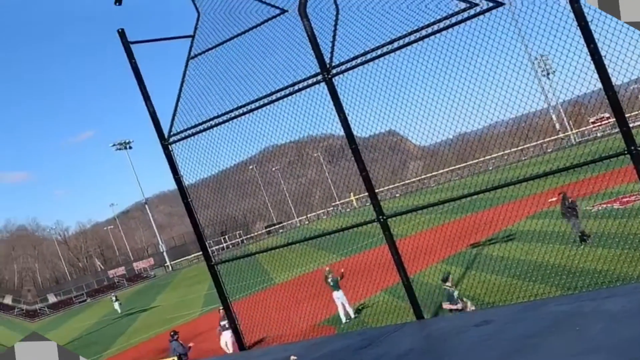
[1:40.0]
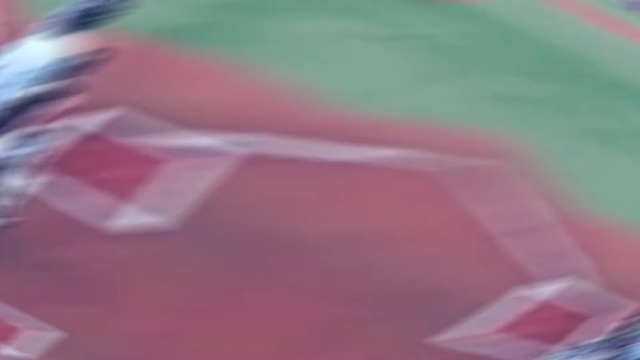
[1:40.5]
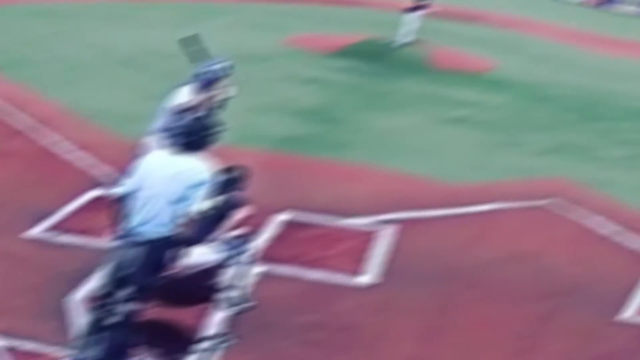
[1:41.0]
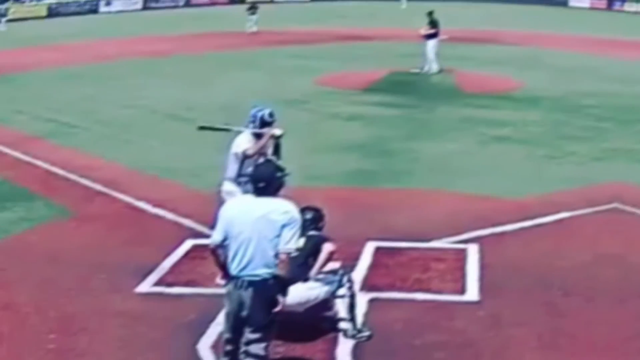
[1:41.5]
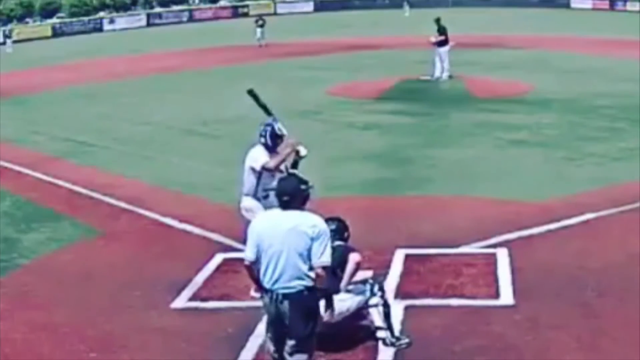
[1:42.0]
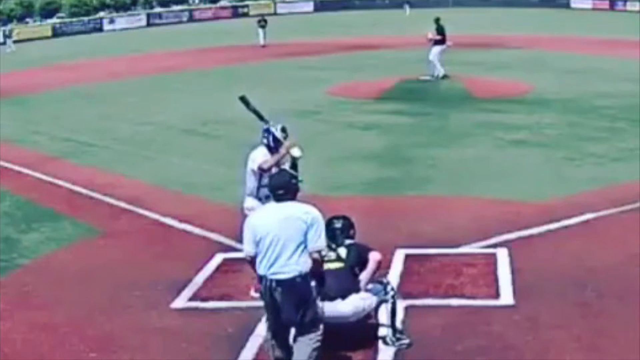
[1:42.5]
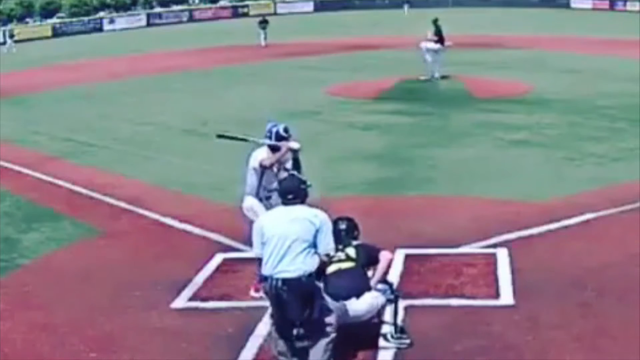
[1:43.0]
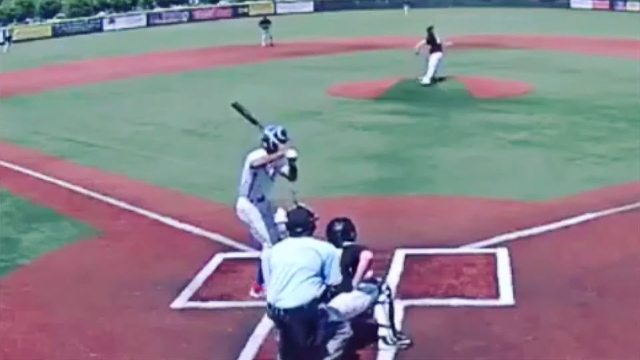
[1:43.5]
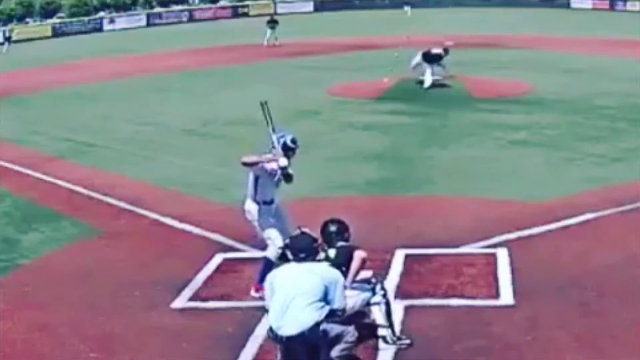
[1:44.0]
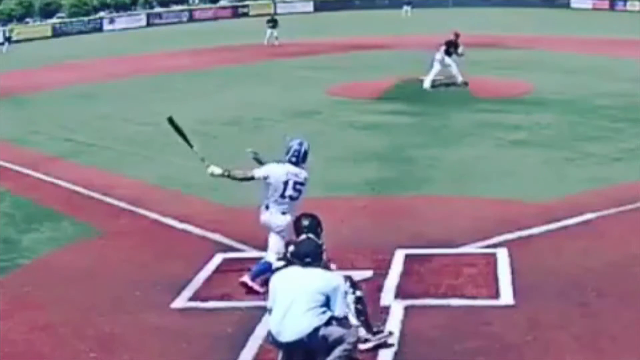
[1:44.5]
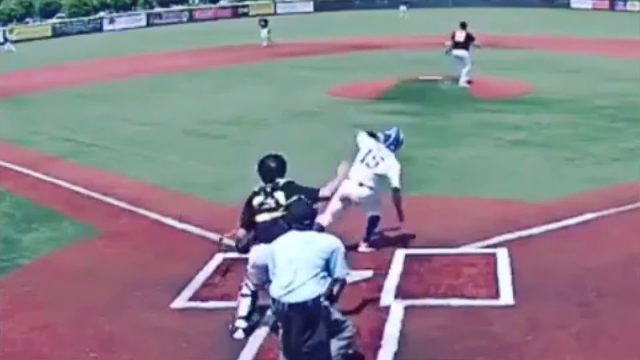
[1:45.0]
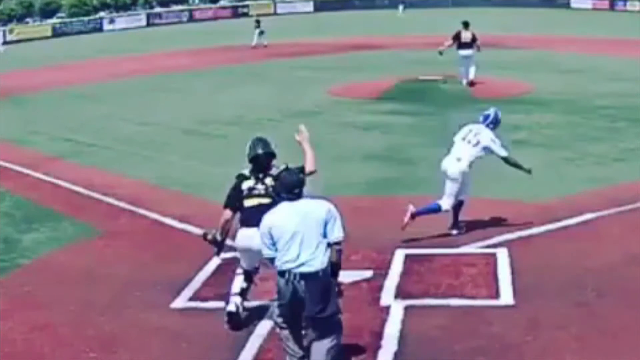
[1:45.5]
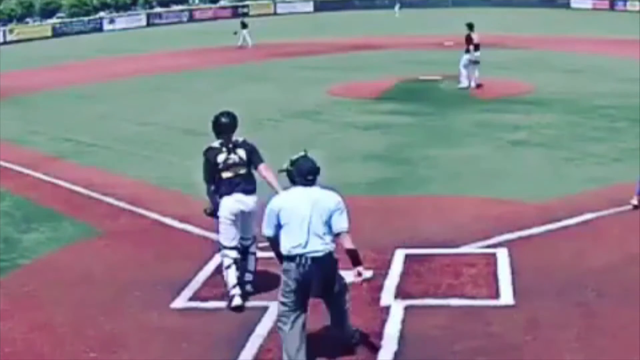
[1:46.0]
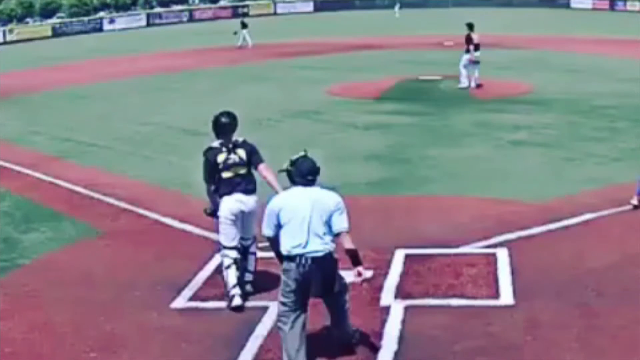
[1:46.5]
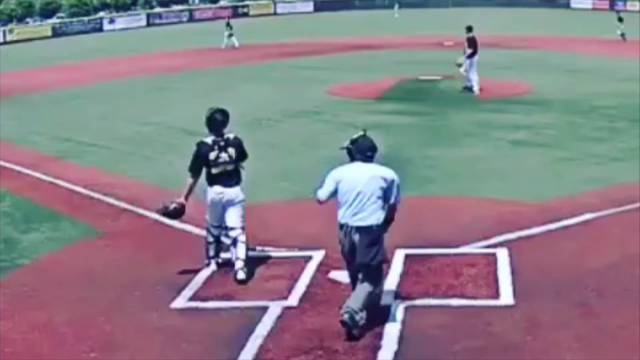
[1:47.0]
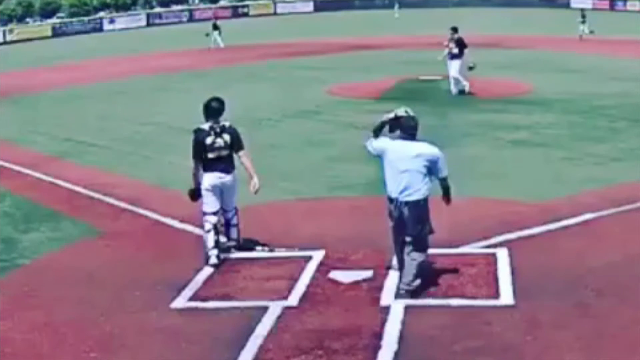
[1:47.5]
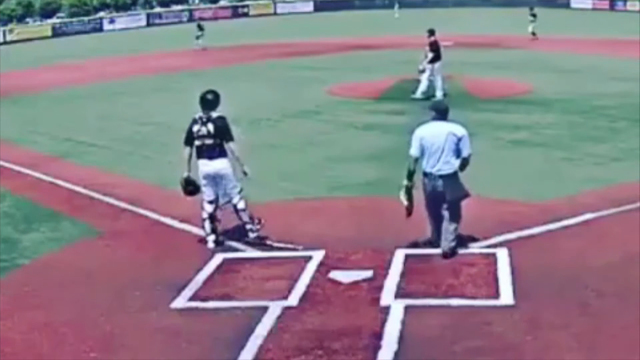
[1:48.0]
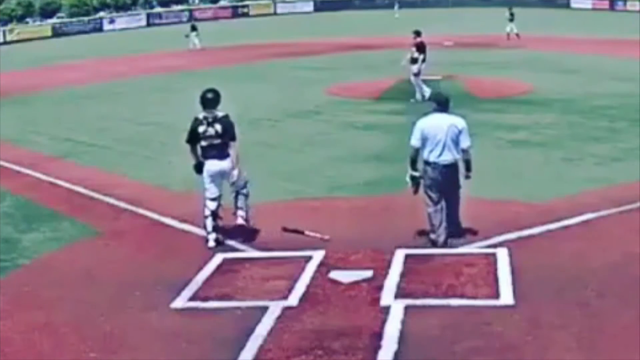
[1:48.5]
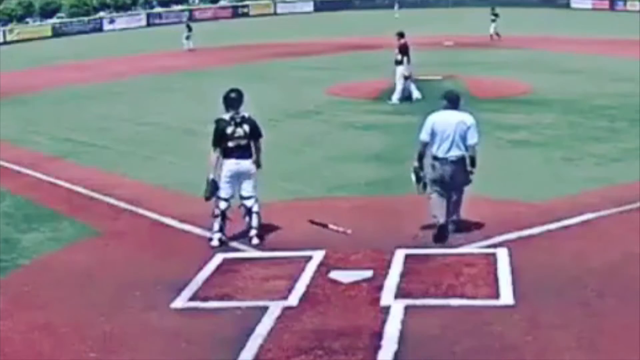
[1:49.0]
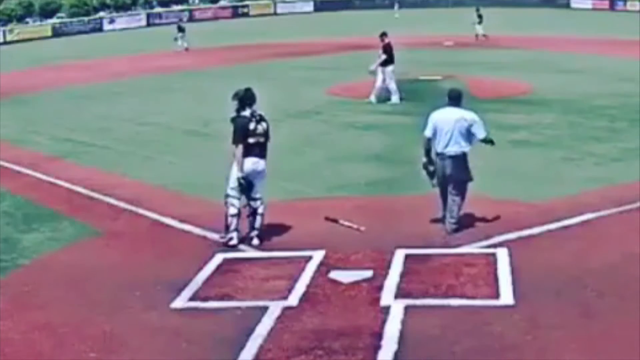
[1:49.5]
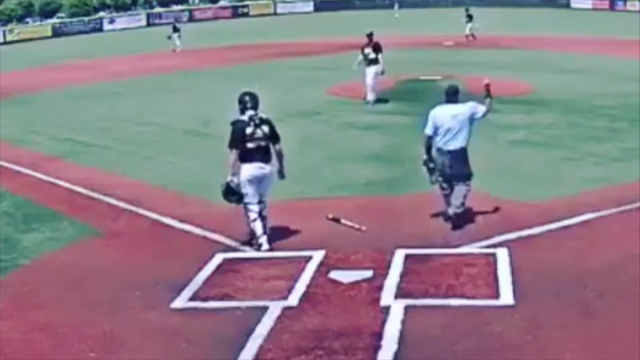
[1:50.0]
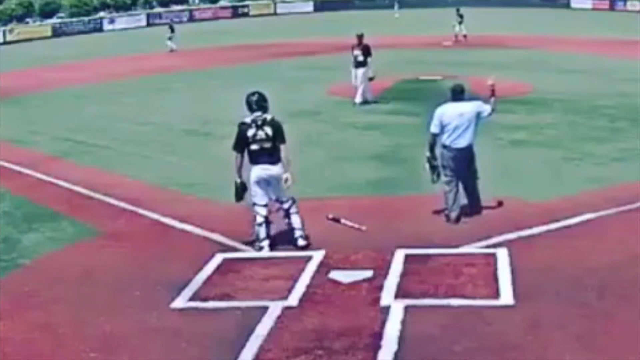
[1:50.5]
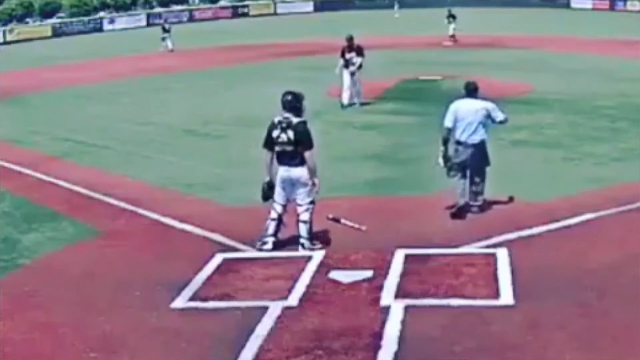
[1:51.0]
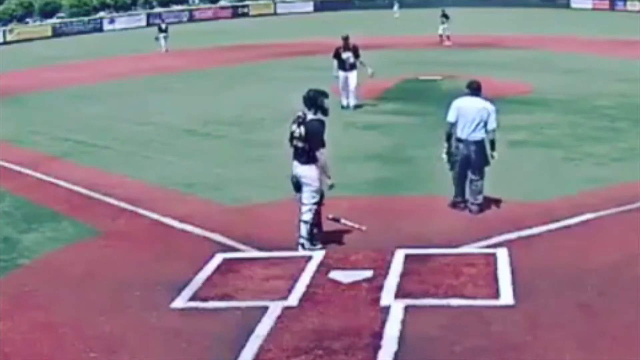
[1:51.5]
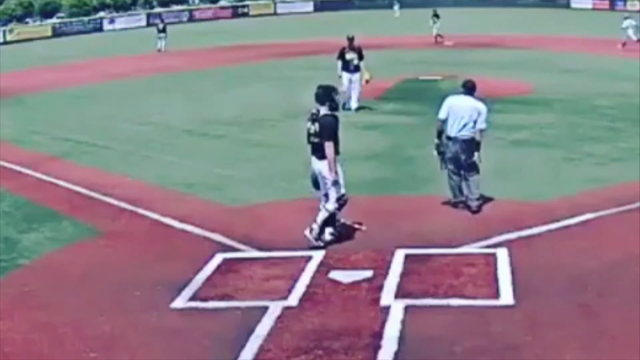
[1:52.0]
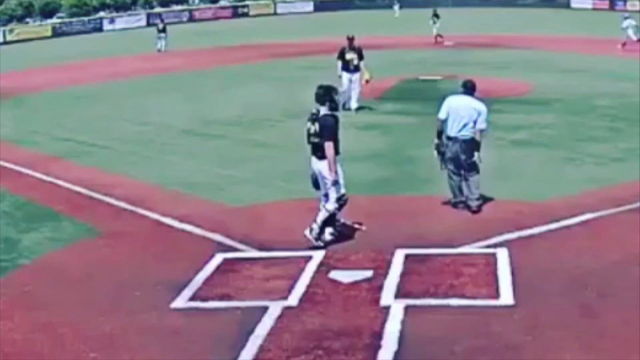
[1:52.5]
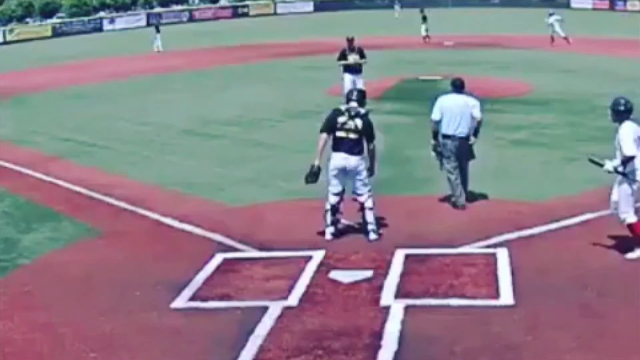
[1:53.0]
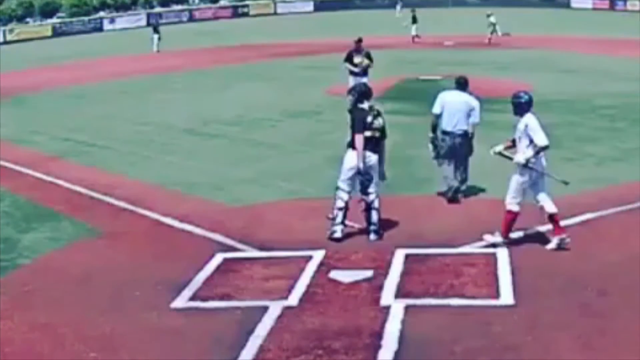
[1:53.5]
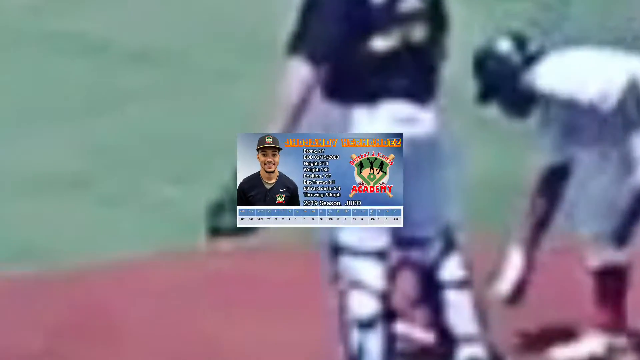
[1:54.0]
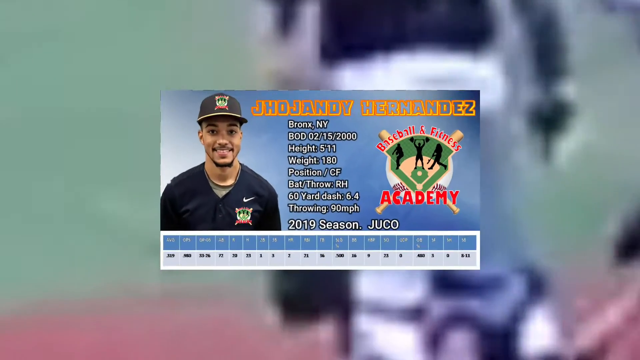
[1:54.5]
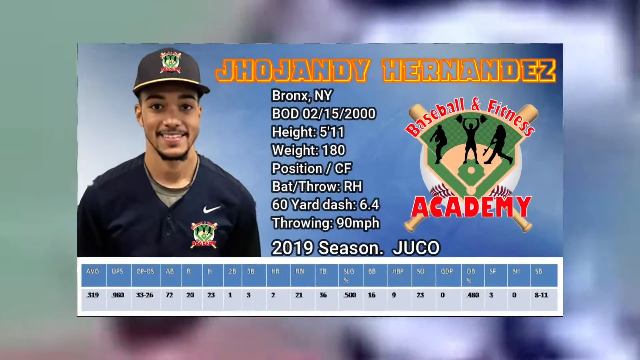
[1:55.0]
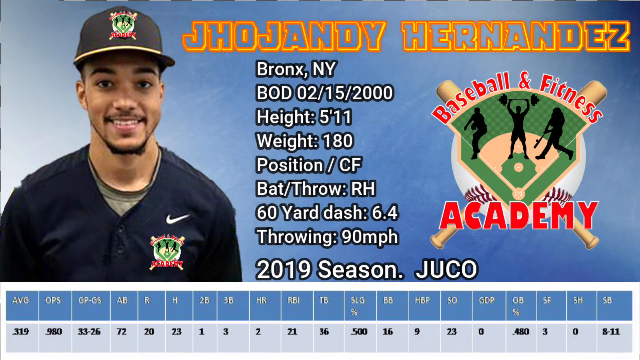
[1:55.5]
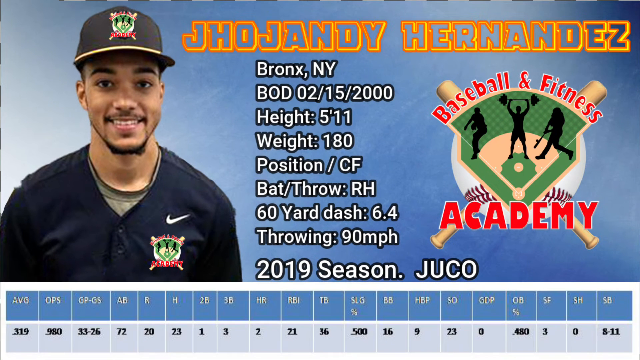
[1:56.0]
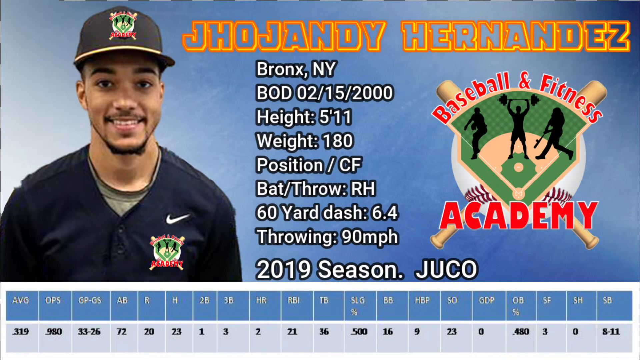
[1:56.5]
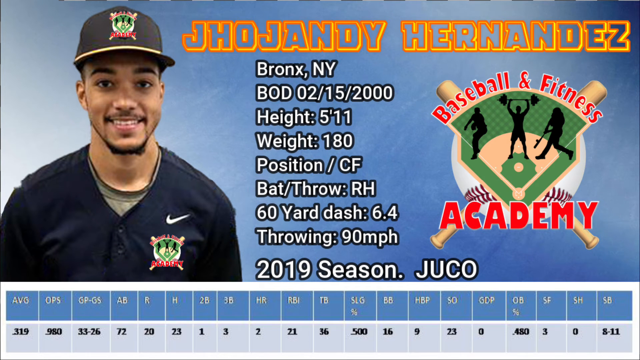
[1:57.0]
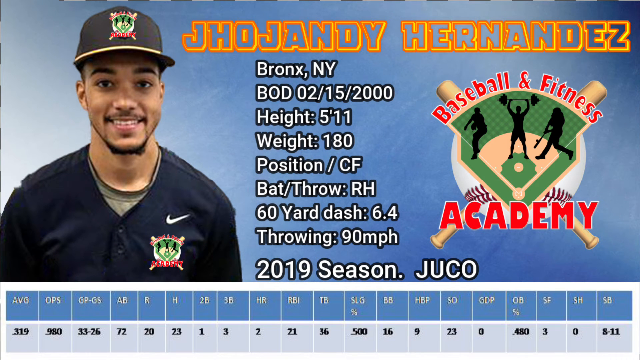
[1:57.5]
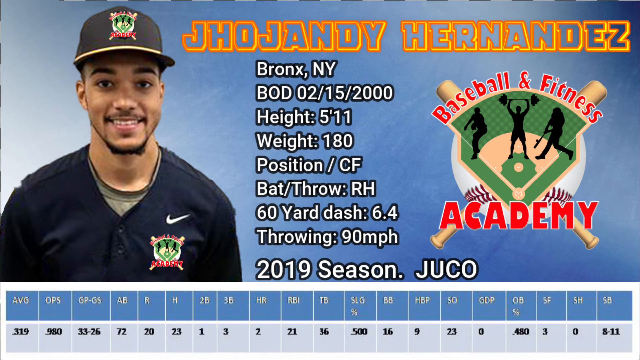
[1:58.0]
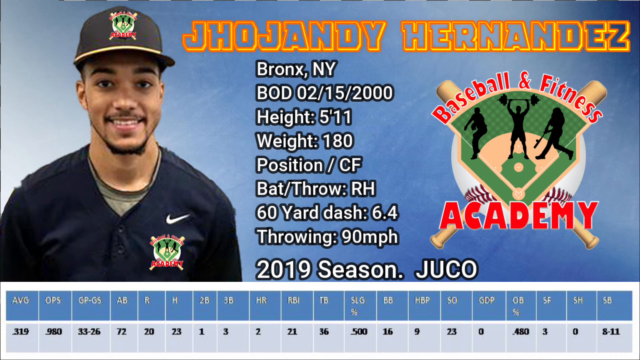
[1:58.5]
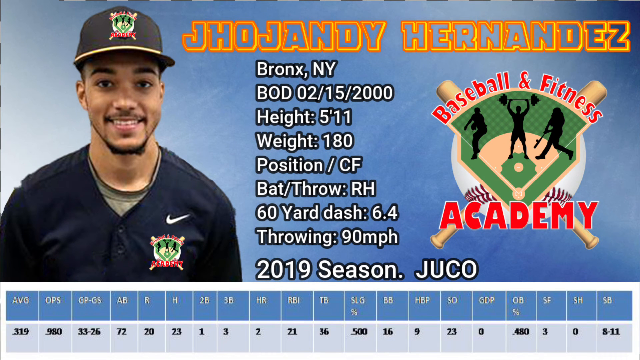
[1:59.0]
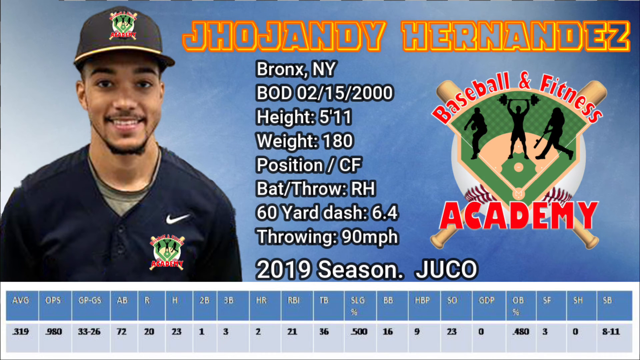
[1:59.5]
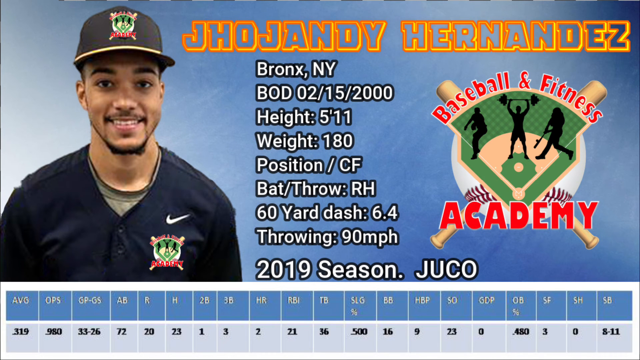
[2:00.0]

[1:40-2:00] A baseball game is going on on a field with a lot of green in the background. A person has just made a hit and run off, and the next person is being called up. The video then cuts to stats for Joe Jandy Hernandez: he is from the Bronx in New York, his birthday is 02-15-2000, his height is 5'11", his weight is 180, and his position is centerfield. It says "bat/throw" with "RH", a 60-yard dash of 6.4, and throwing of 90 miles per hour, followed by his stats for the 2019 season, "J-U-C-O". As the video continues, the stats appear in small print across the whole bottom portion of the video.